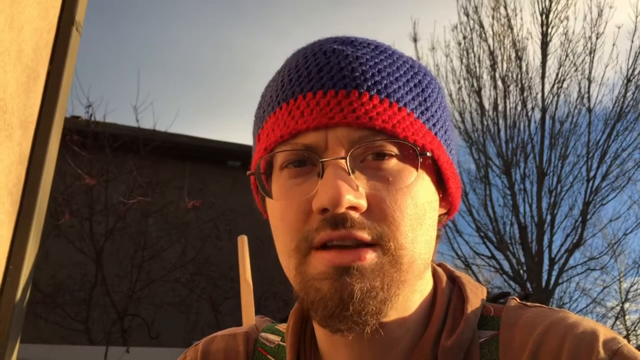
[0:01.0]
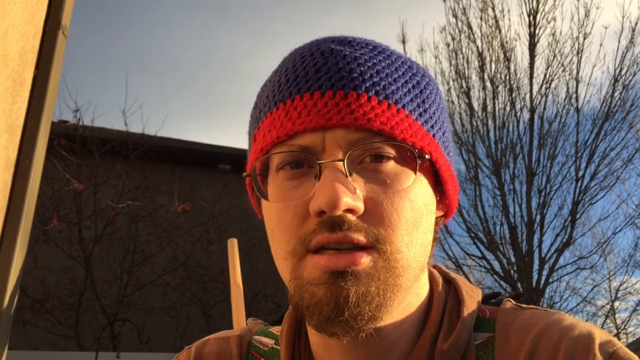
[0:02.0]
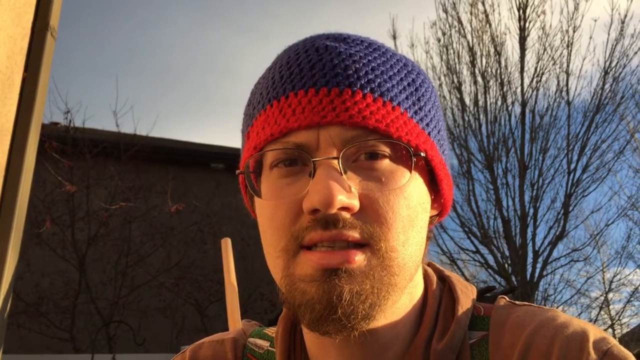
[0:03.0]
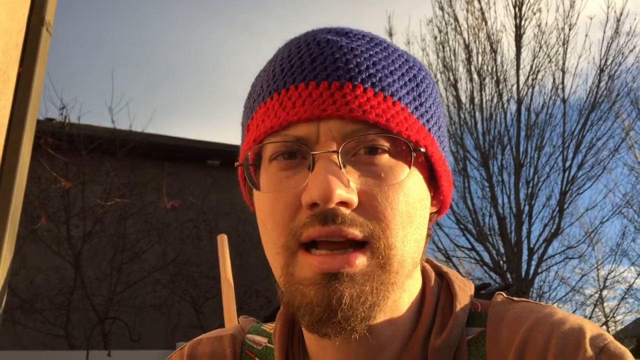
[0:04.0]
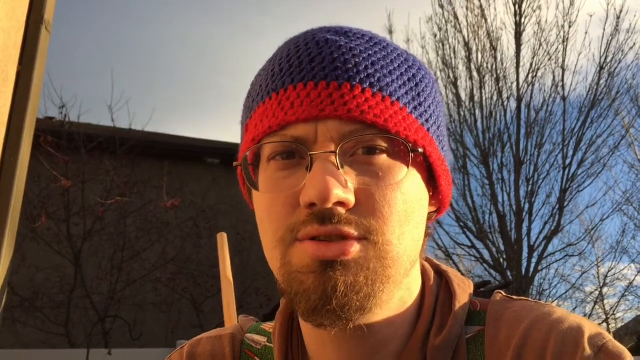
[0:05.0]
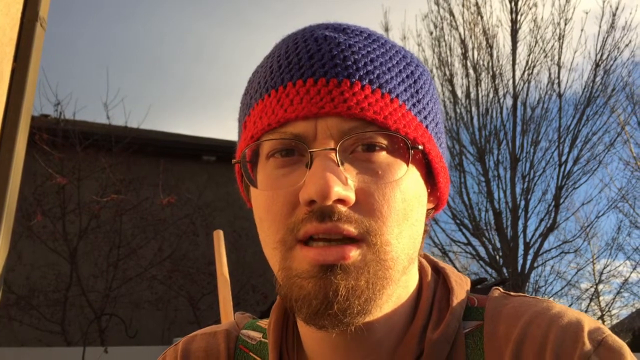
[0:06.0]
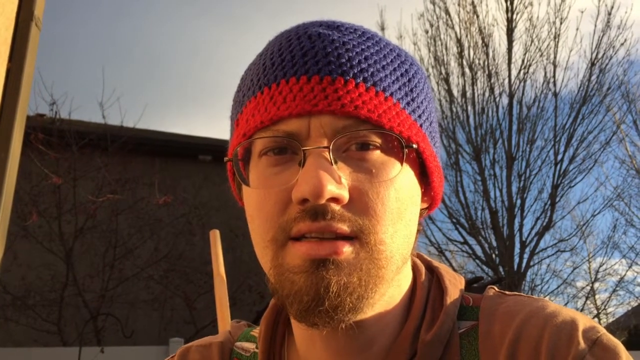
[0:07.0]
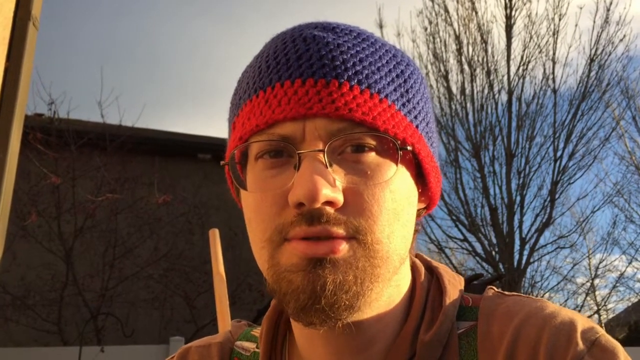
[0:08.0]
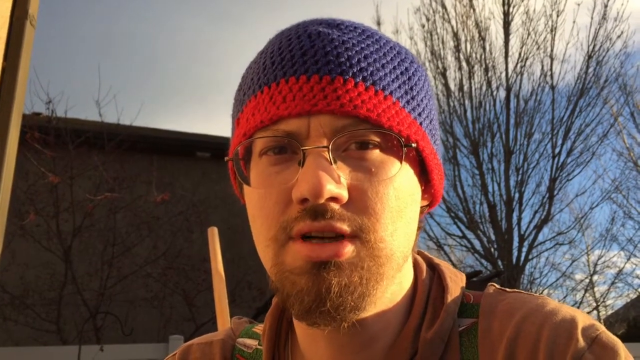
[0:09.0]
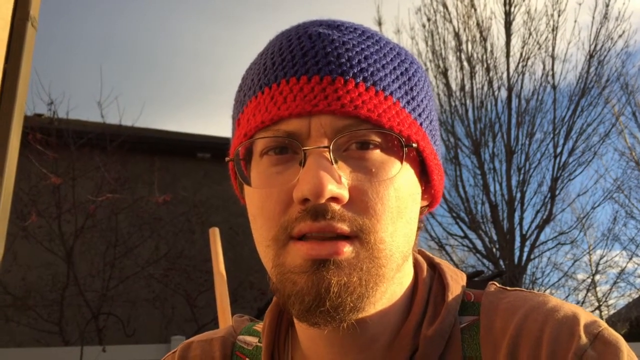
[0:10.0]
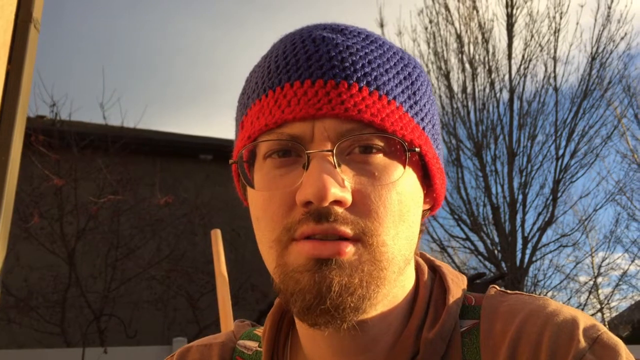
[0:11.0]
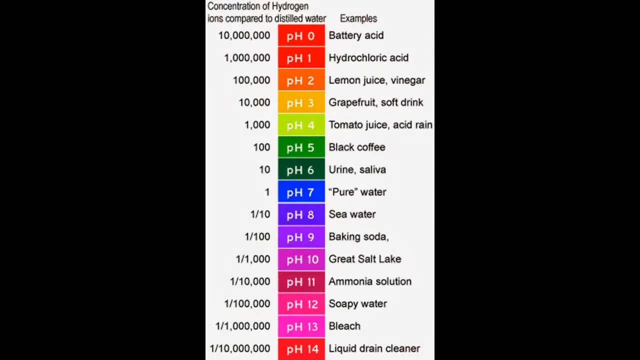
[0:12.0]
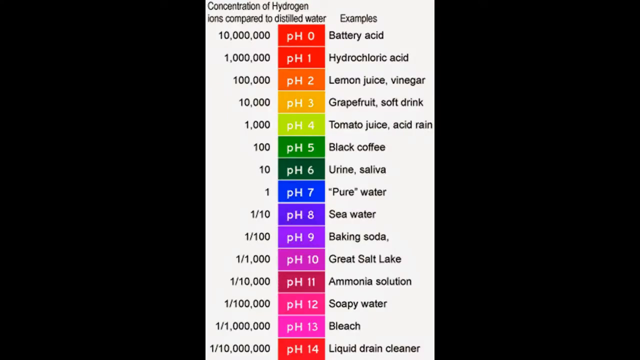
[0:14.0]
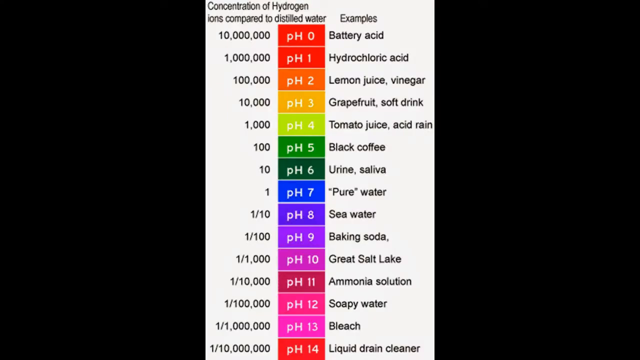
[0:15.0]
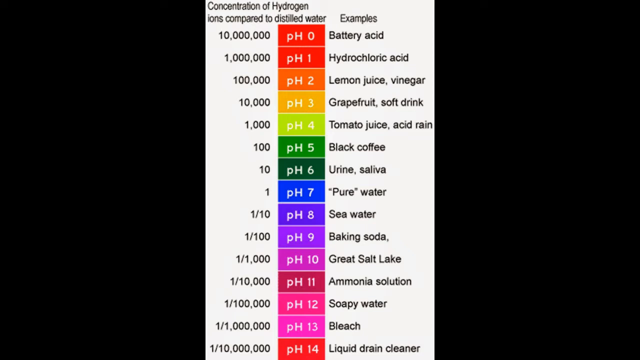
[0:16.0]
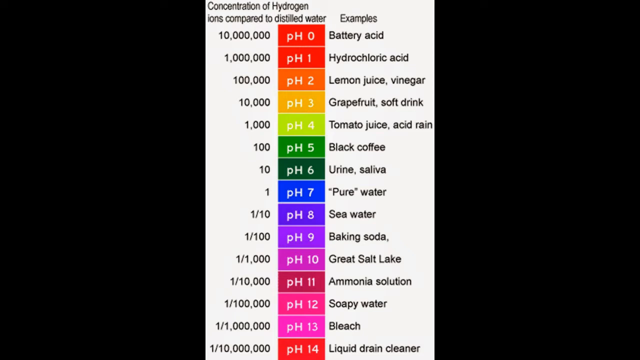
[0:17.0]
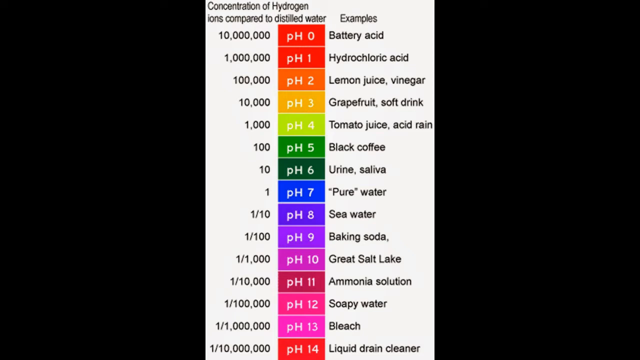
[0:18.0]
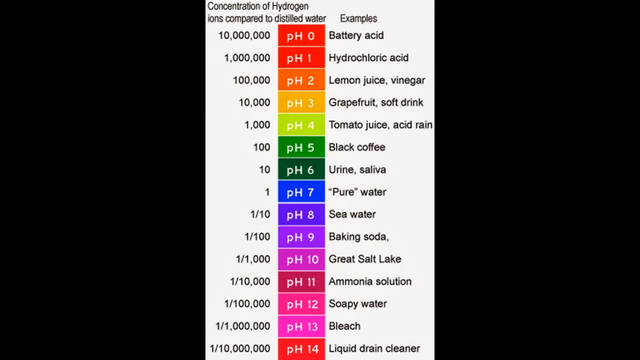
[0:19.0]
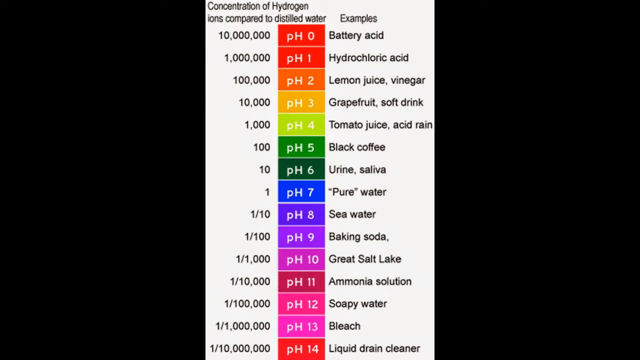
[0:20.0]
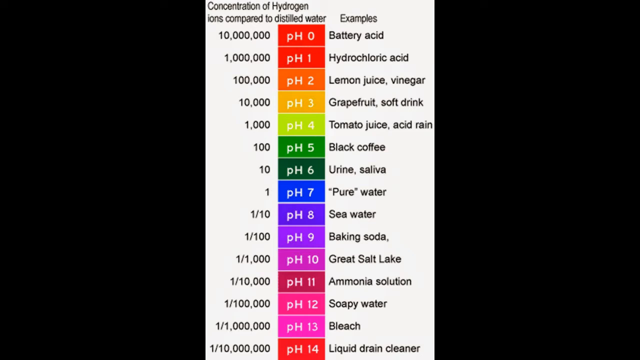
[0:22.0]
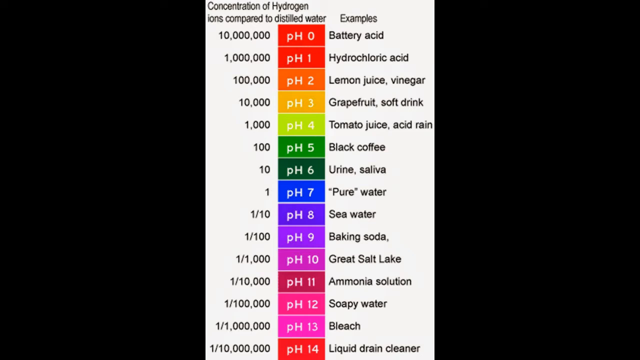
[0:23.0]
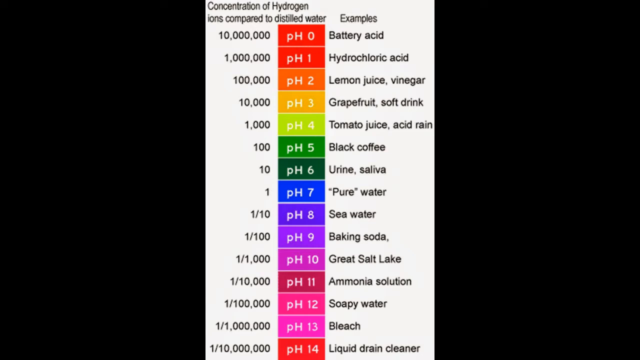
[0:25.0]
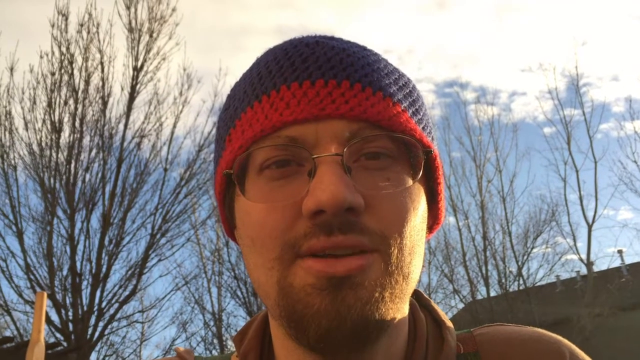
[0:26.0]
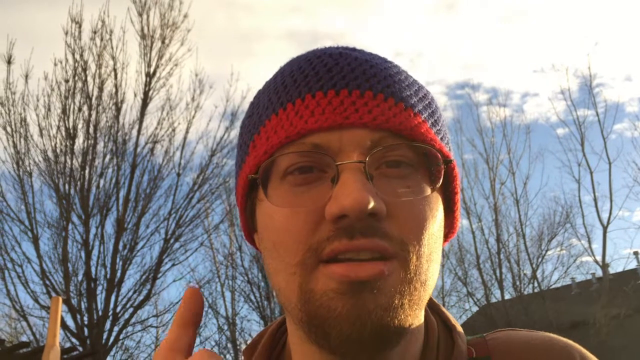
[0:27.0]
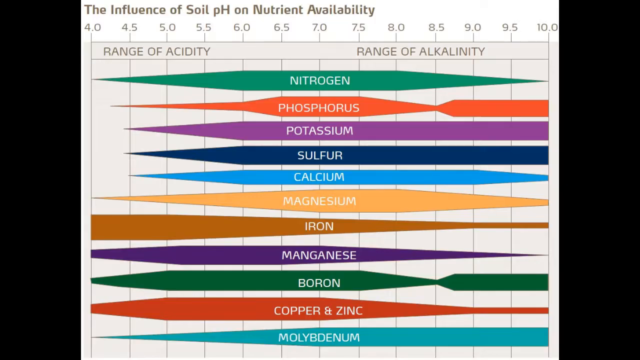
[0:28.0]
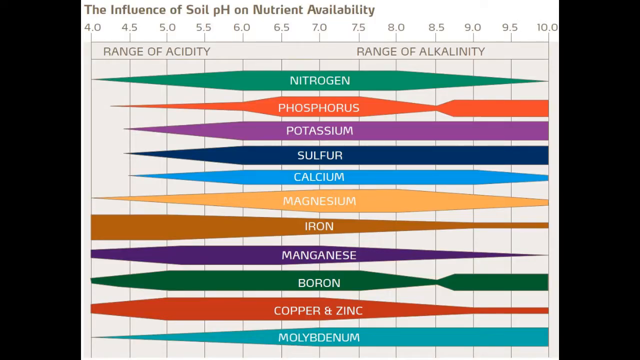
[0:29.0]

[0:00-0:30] A Caucasian man is seen from his shoulders up, facing the camera. He wears glasses and a beanie on his head that is red on the bottom and blue on the top. He has a goatee, a mustache and a beard around his chin, all light brown, and he appears to be wearing a brown coat. Behind him are a tree, a building and a blue sky with some clouds. He seems to be talking, moving his lips while staring at the camera. He blinks, blinks again and keeps talking, then holds up his right hand with the index finger extended and the other fingers down. The view switches to a screen with a black background and a white rectangle running from top to bottom in the center, holding a chart that says "concentration of hydrogen ions compared to distilled water." At the top left is the number 10,000,000, with a column of further numbers below it. A column of pH values ranges from pH 0 down to pH 14 at the bottom. To the right of the pH values the chart lists "battery acid, hydrochloric acid, lemon juice, vinegar, grapefruit, soft drink, tomato juice, acid rain, black coffee, urine, saliva, pure water, seawater, baking soda, gray salt lake, ammonia solution, soapy water, bleach." The view switches back to the man, who holds up the tip of his right finger, and then switches to another chart.